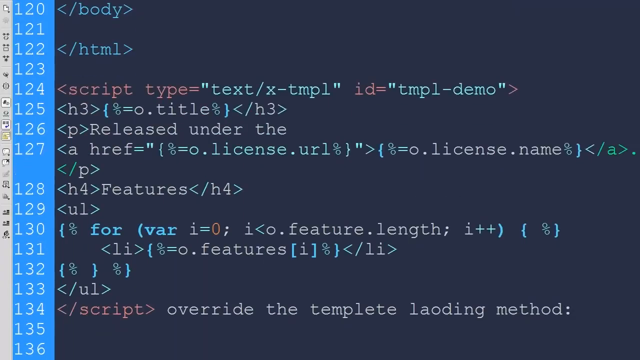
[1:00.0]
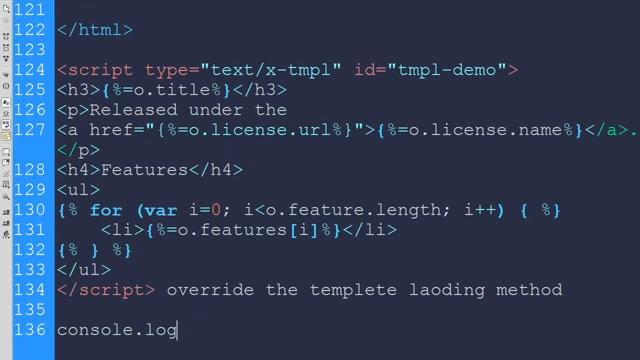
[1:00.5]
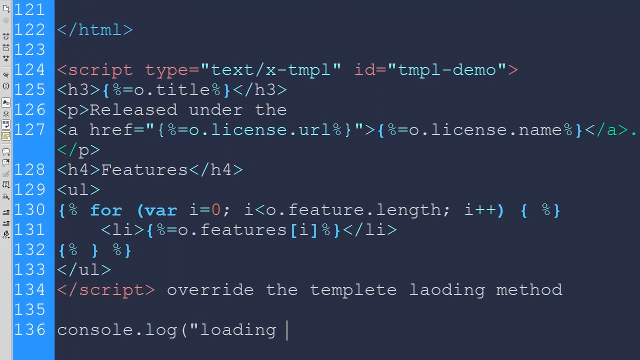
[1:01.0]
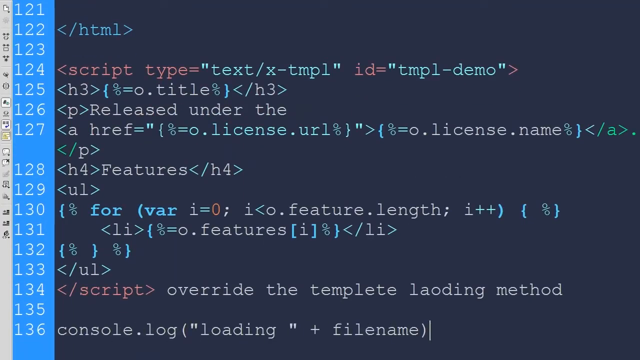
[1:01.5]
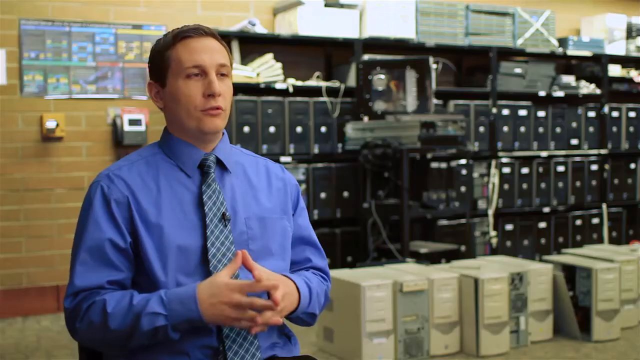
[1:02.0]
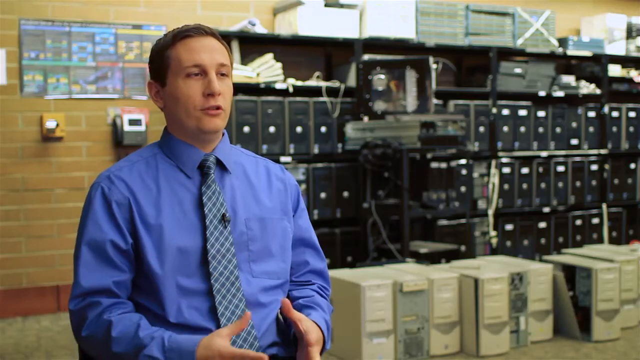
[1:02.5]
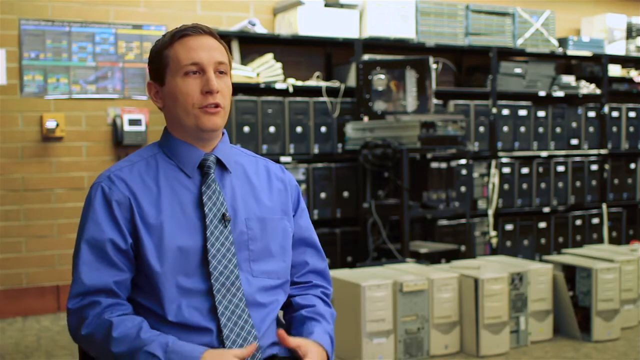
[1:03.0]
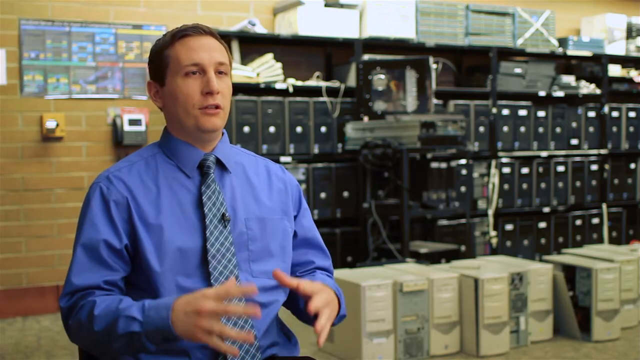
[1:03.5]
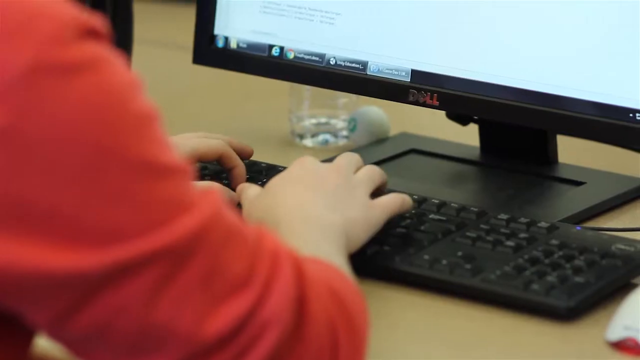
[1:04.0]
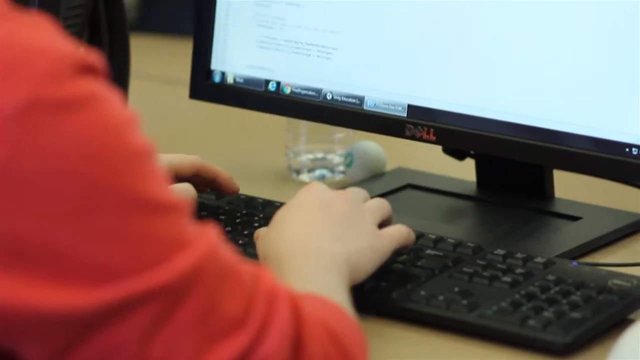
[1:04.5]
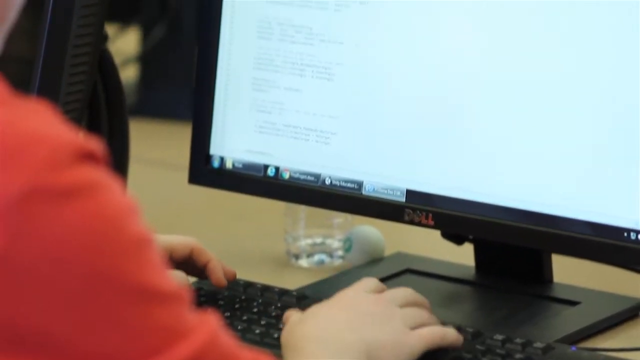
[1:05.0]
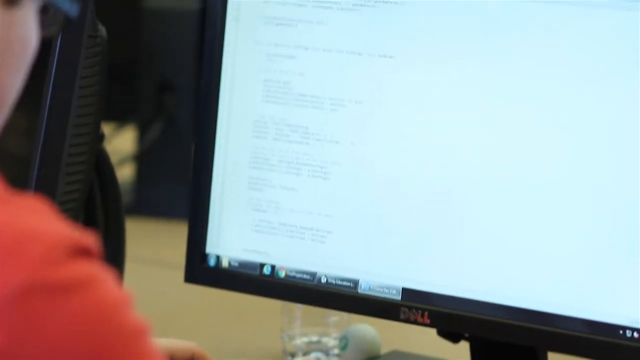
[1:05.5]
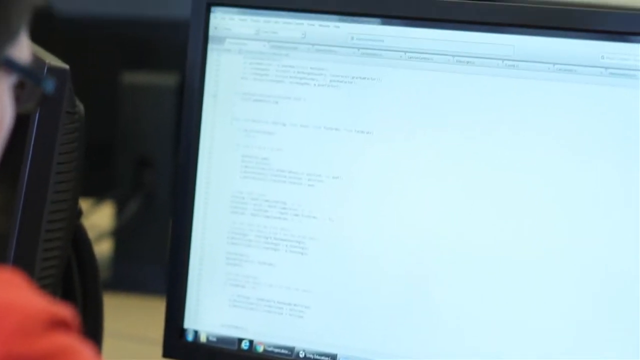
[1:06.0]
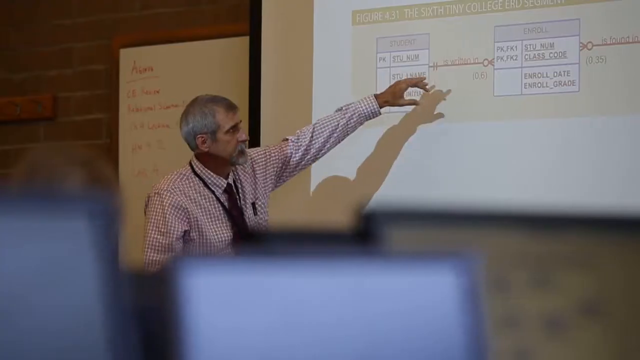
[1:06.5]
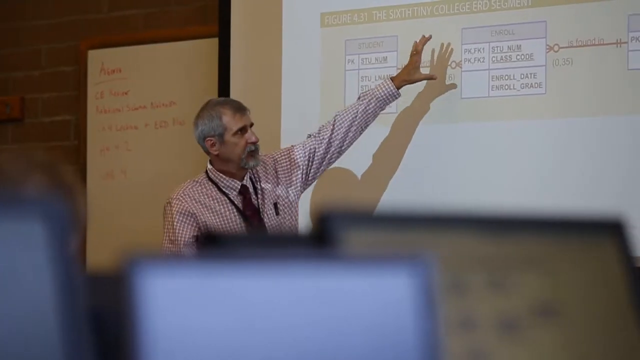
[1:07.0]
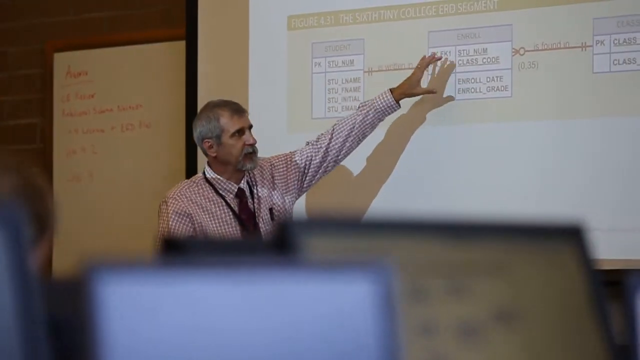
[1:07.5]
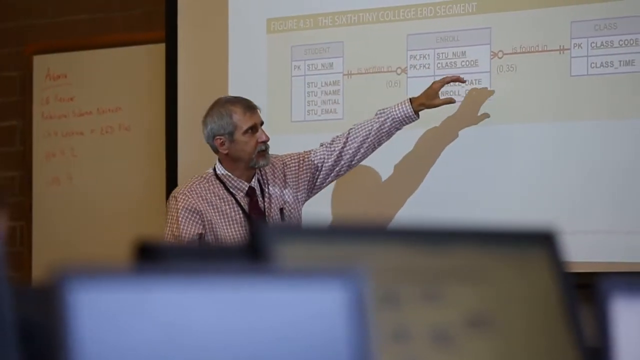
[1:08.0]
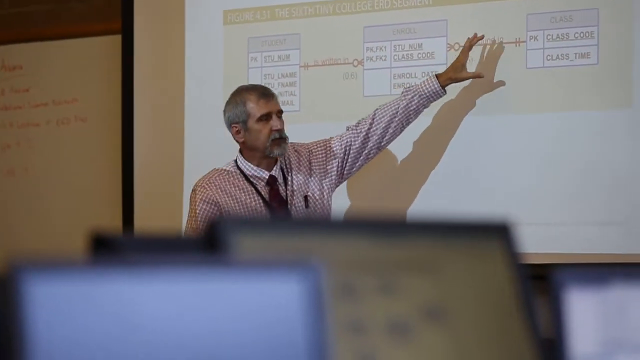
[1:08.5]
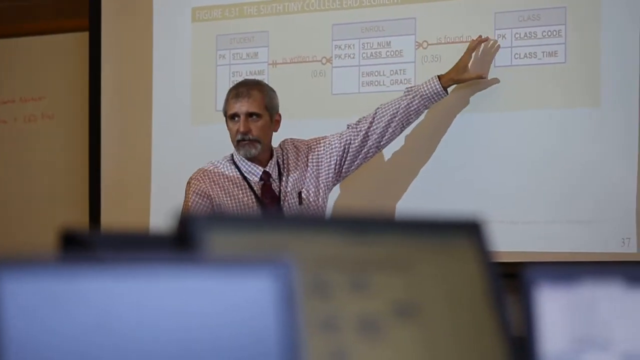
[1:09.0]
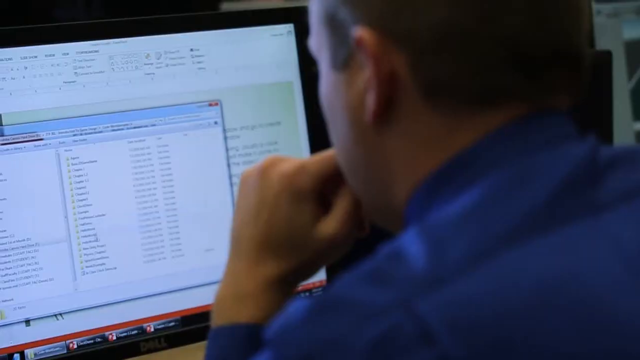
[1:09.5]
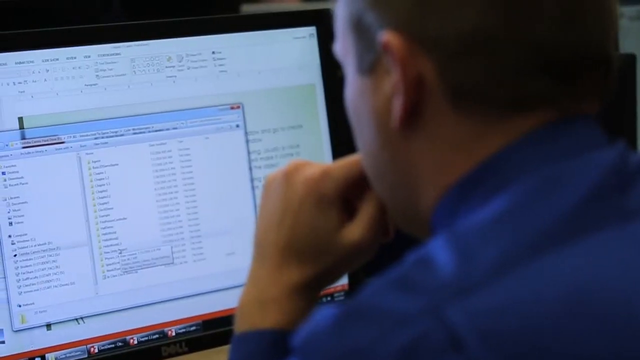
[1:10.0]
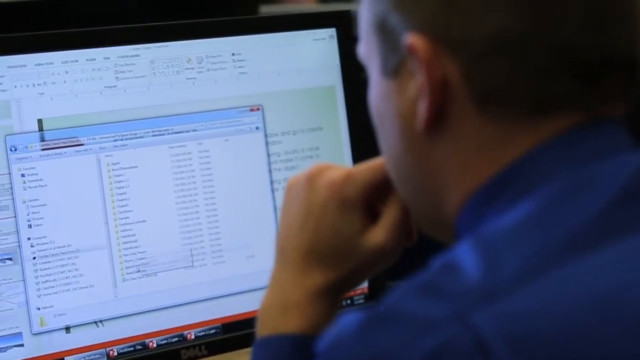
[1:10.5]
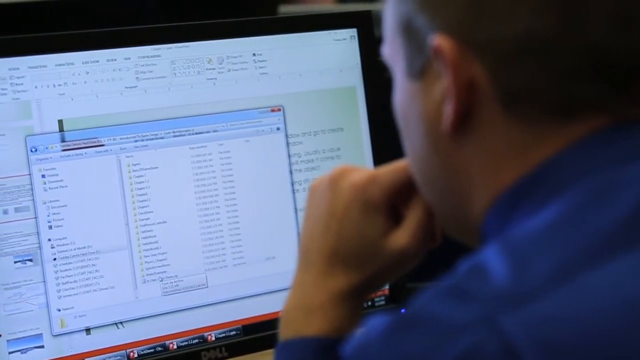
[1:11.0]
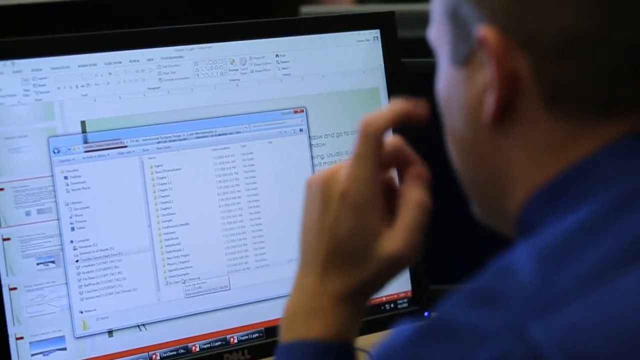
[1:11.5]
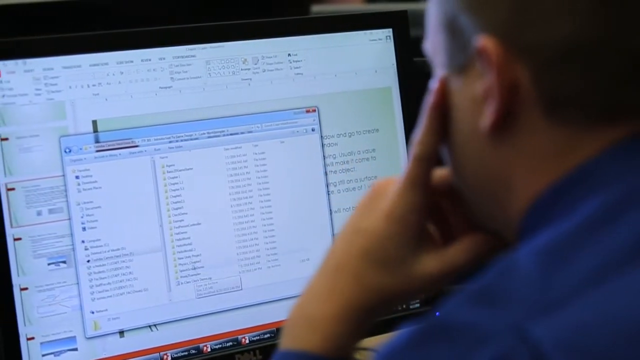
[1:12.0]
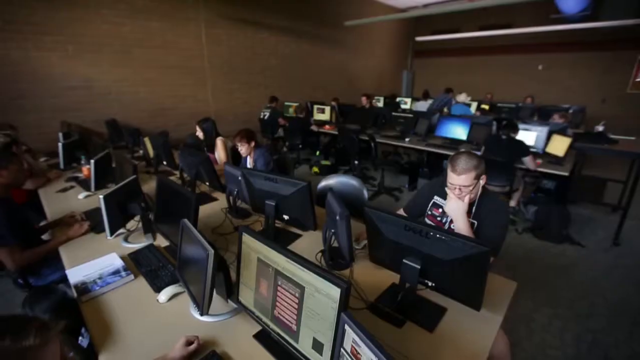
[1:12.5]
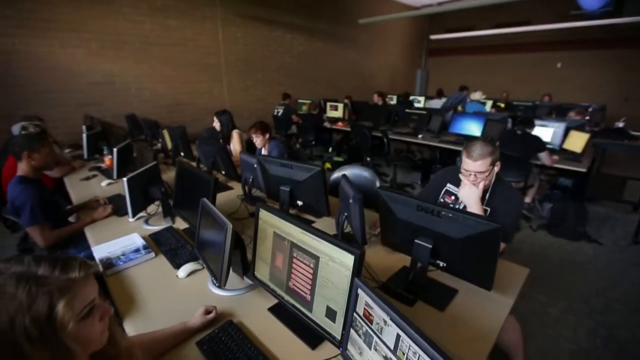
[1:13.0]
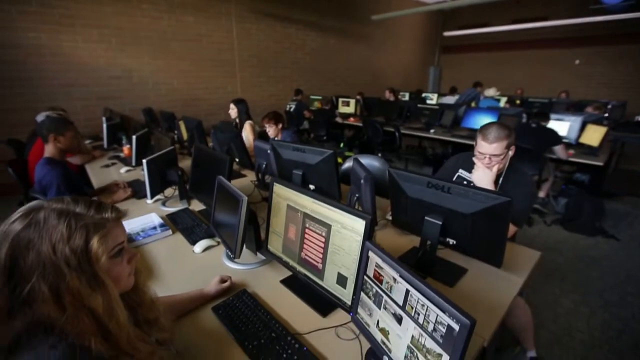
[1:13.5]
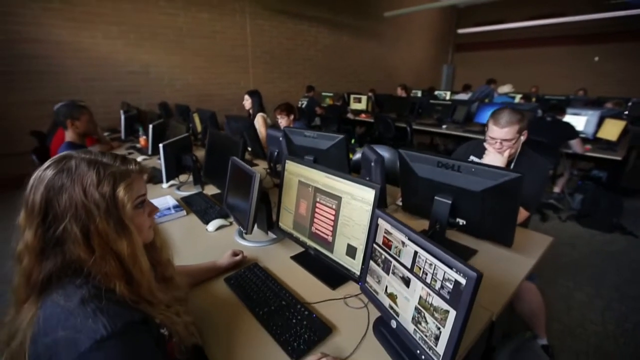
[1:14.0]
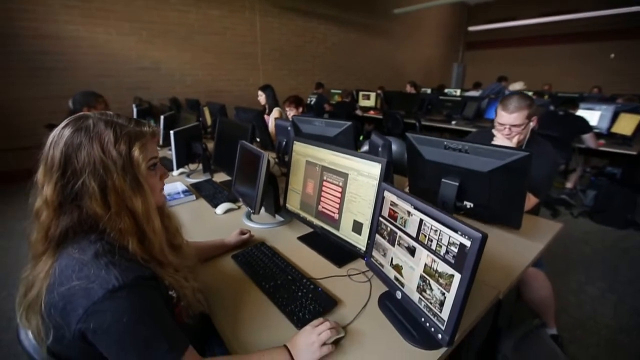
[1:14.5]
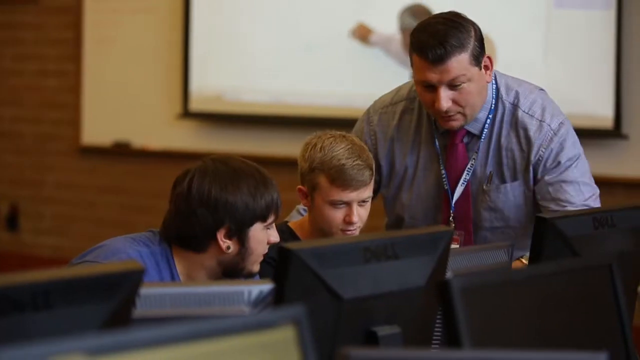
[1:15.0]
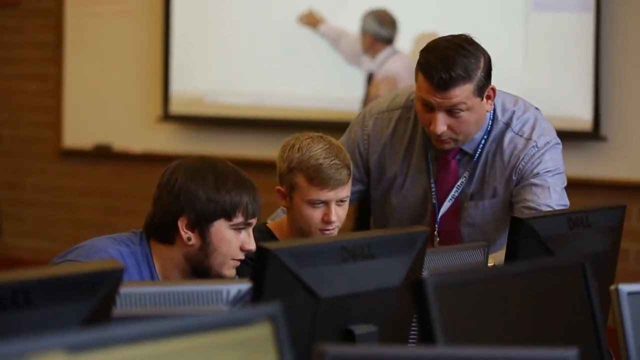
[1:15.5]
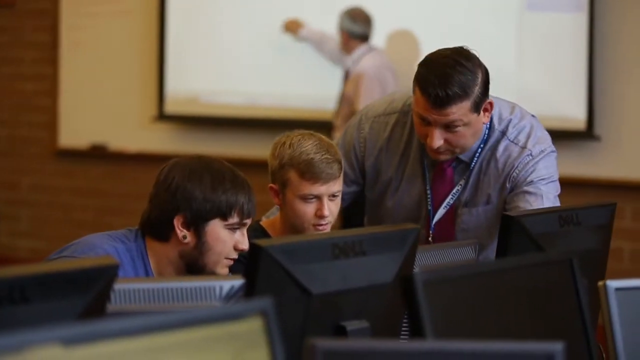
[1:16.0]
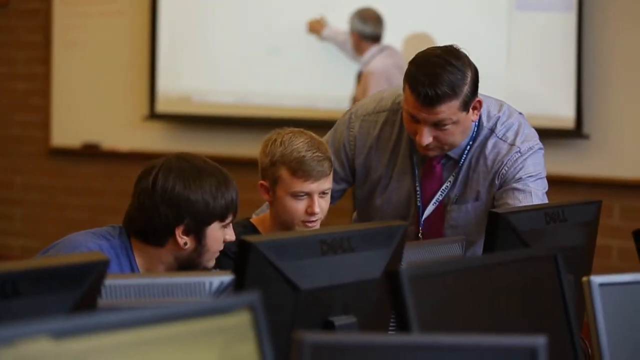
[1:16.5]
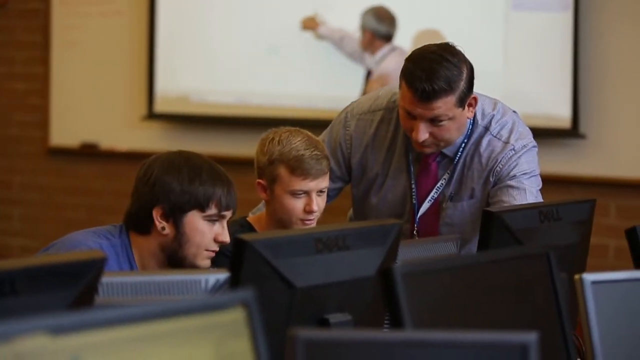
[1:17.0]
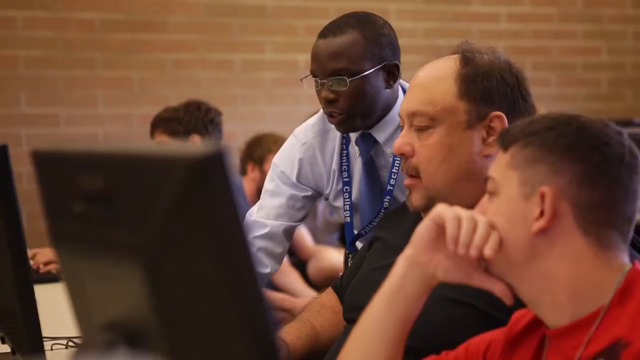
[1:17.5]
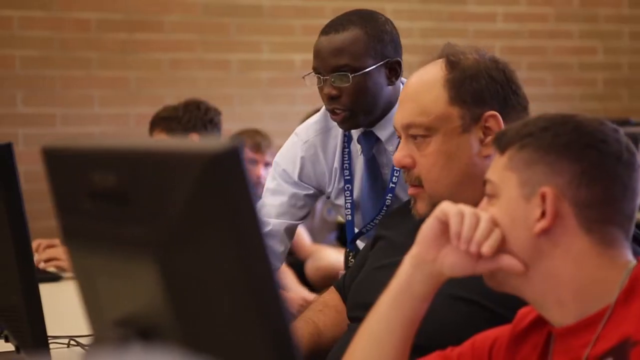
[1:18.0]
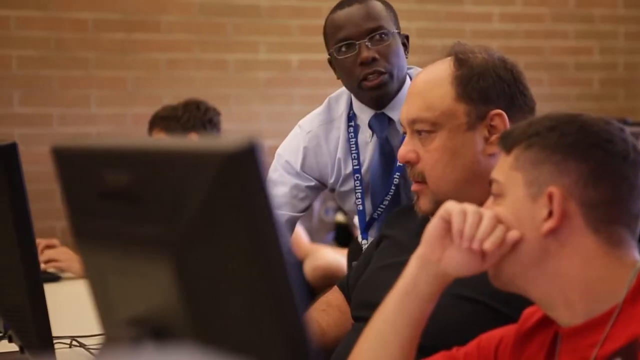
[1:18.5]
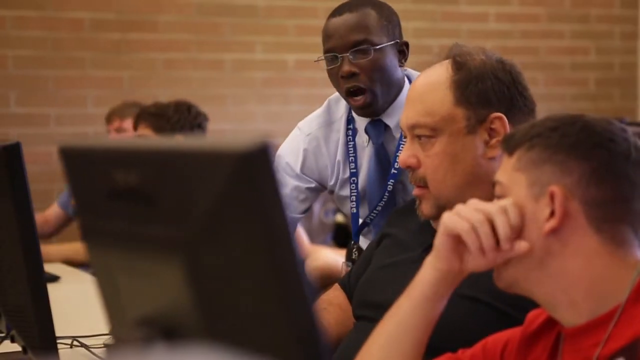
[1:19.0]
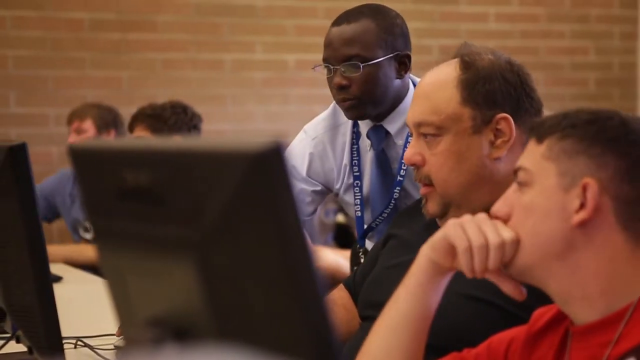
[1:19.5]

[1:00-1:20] The video goes back to the instructor in the blue shirt, then to a student's computer screen. Roger stands at the board, now apparently in a different shirt: a red and white checkered button-down with a burgundy tie. He points at what looks like a chart projected on a screen, showing three rectangles or squares with text on them. A computer screen follows, then the camera pans across a whole classroom full of people. Two different shots show instructors helping students. More computer language appears, the HTML language, with a blue text banner along the side holding consecutive line numbers next to each line of script, such as 122 and 123. Many different classroom settings of computer programming follow.